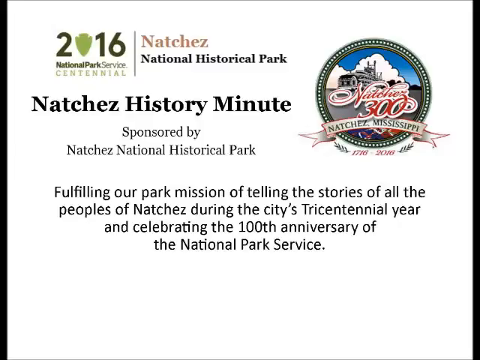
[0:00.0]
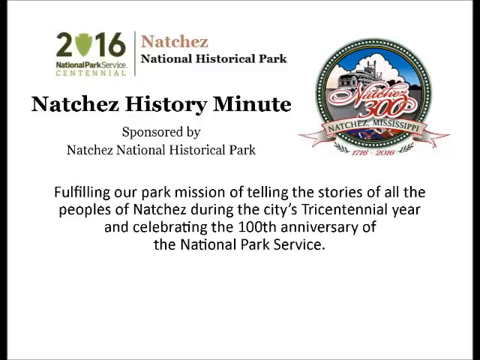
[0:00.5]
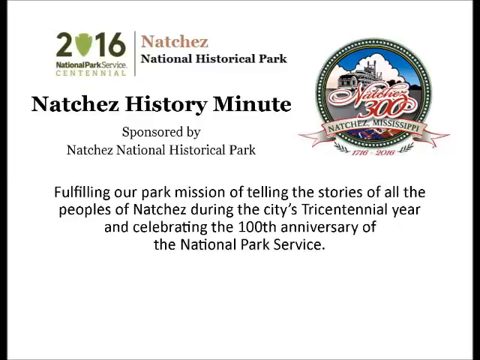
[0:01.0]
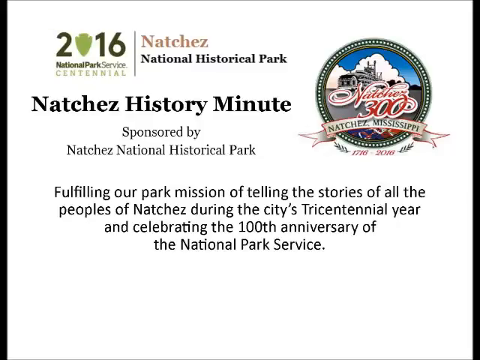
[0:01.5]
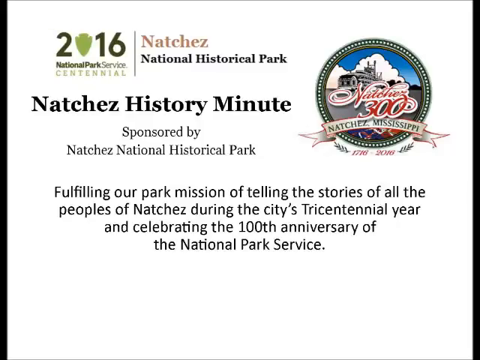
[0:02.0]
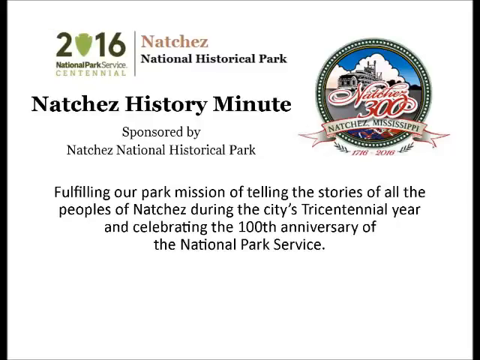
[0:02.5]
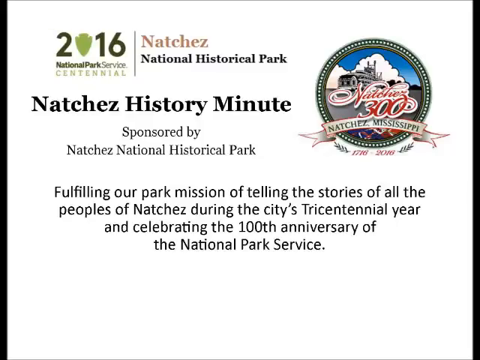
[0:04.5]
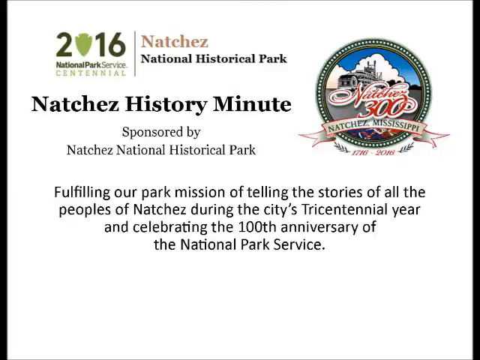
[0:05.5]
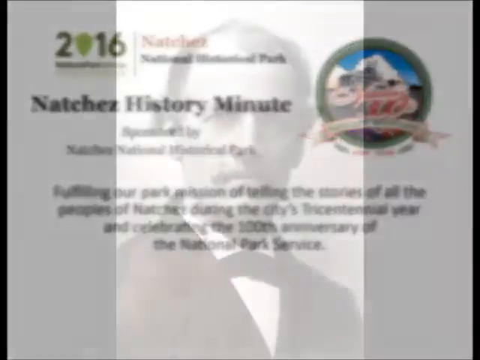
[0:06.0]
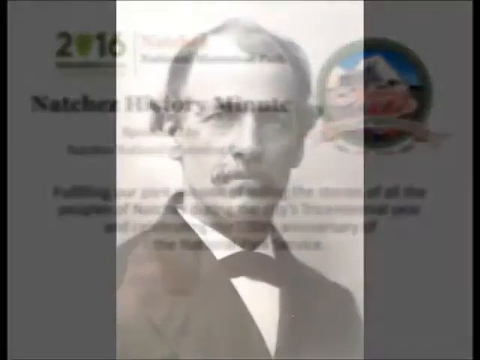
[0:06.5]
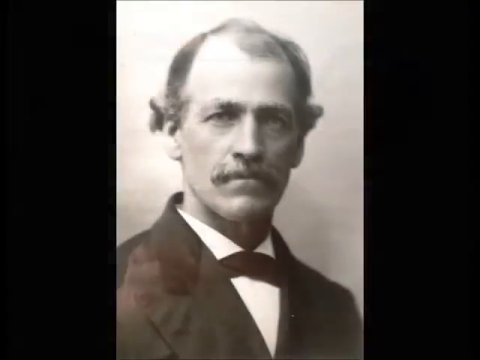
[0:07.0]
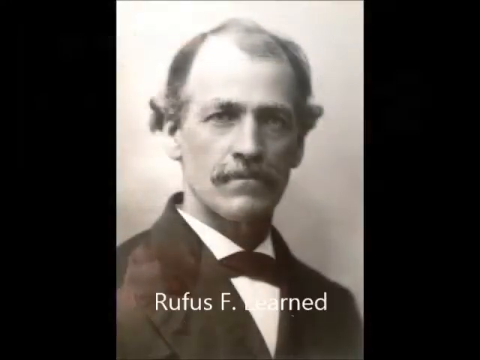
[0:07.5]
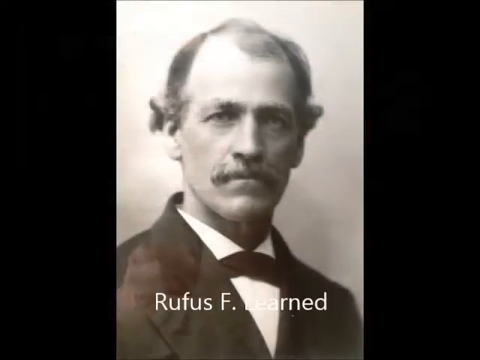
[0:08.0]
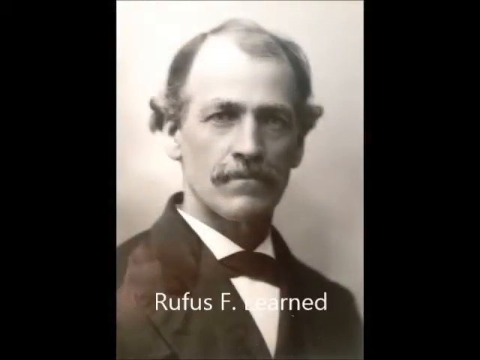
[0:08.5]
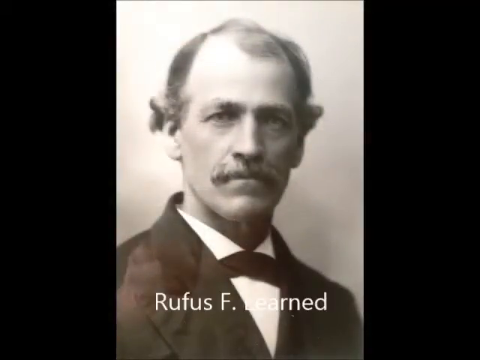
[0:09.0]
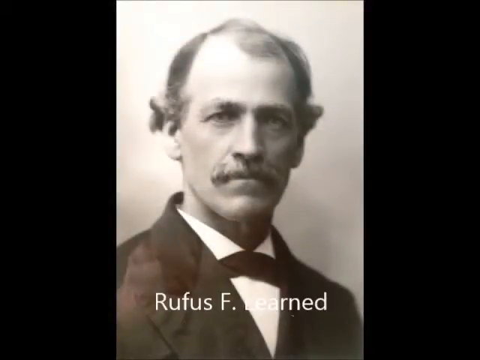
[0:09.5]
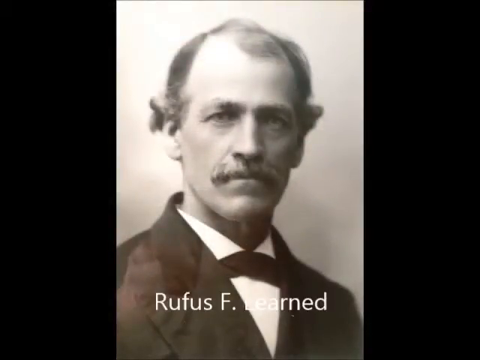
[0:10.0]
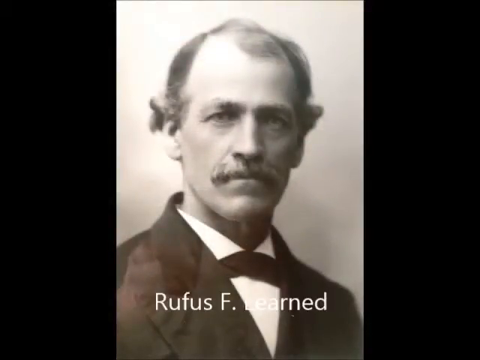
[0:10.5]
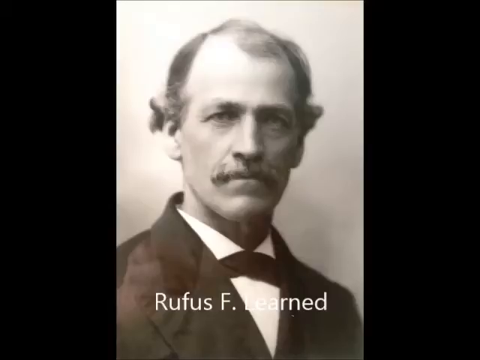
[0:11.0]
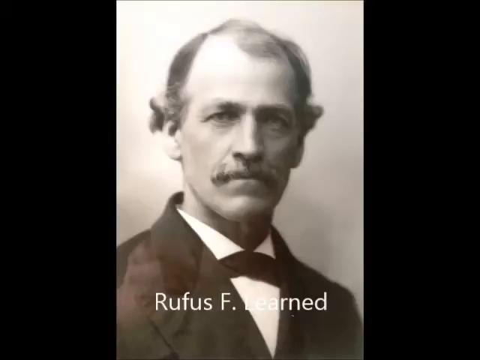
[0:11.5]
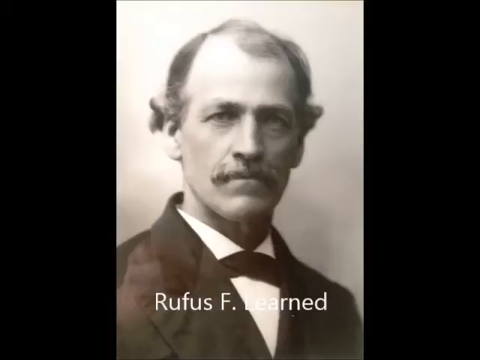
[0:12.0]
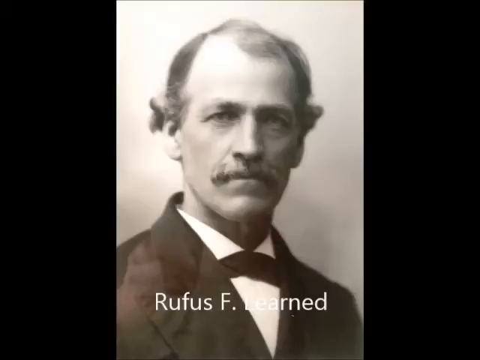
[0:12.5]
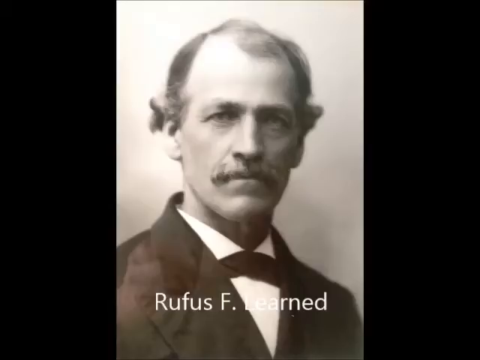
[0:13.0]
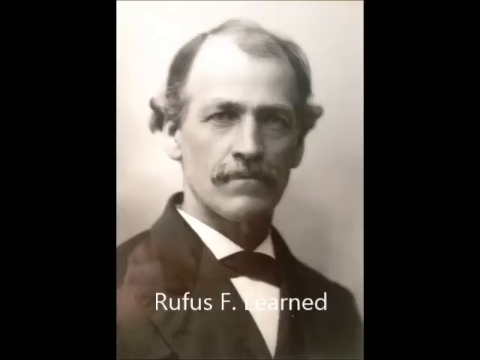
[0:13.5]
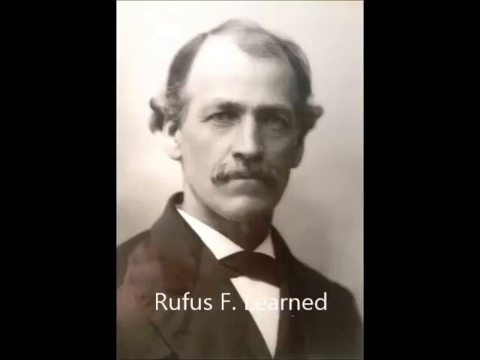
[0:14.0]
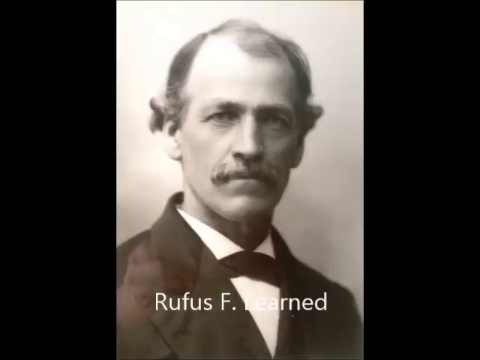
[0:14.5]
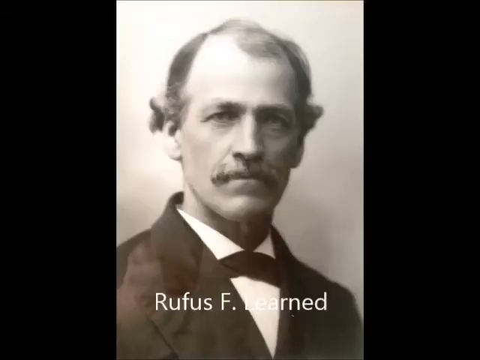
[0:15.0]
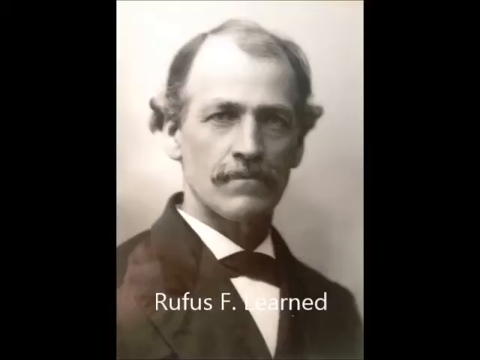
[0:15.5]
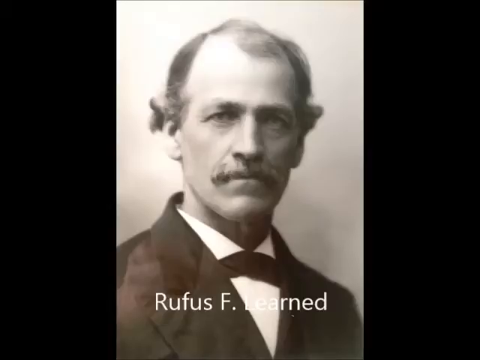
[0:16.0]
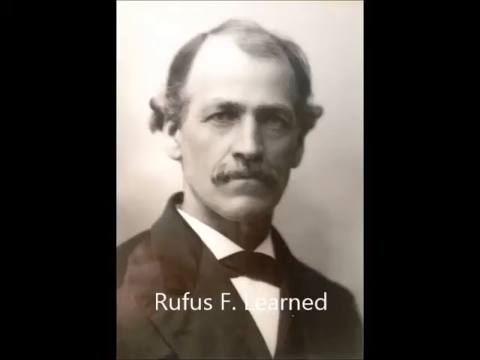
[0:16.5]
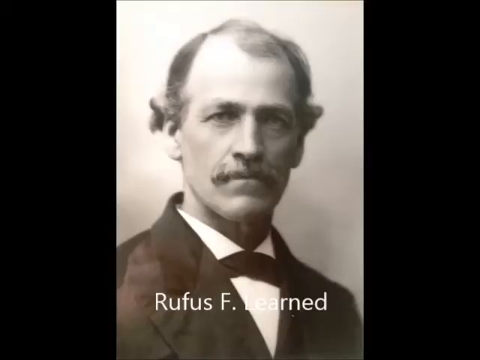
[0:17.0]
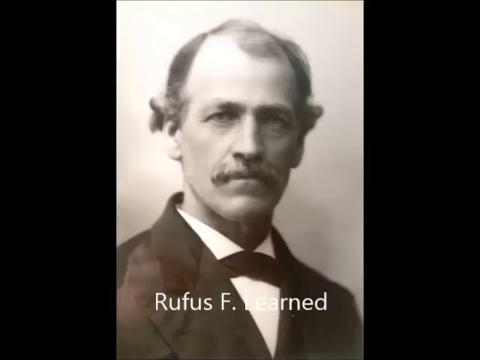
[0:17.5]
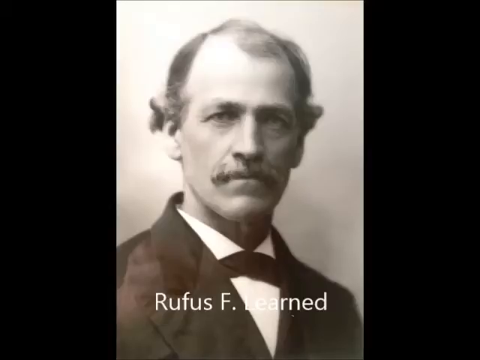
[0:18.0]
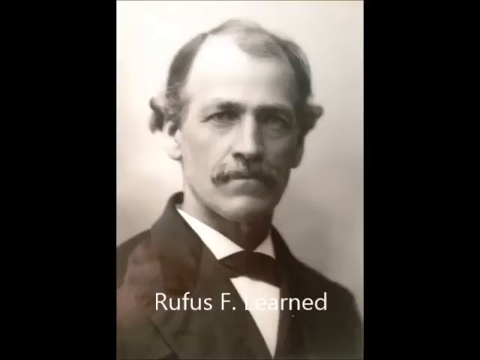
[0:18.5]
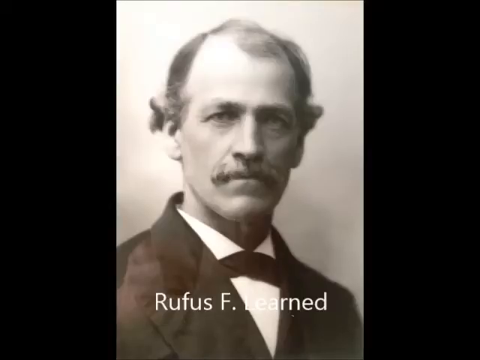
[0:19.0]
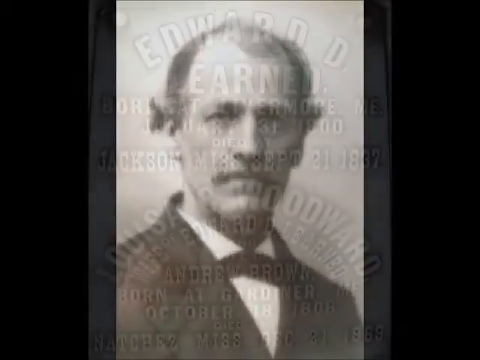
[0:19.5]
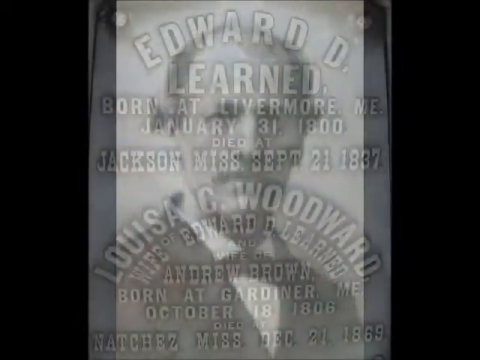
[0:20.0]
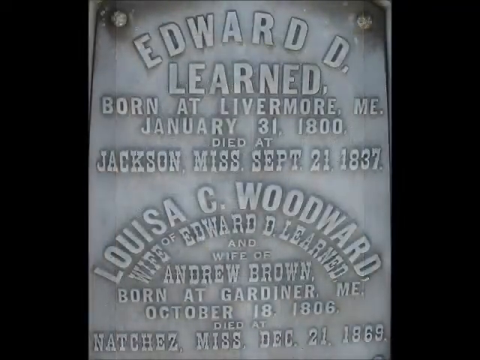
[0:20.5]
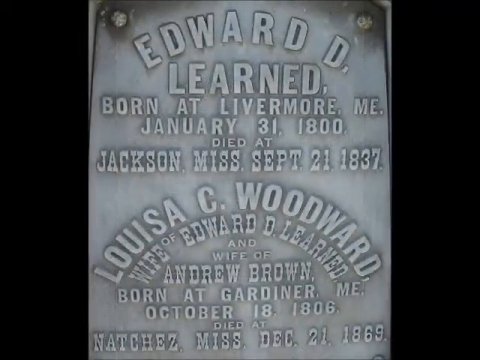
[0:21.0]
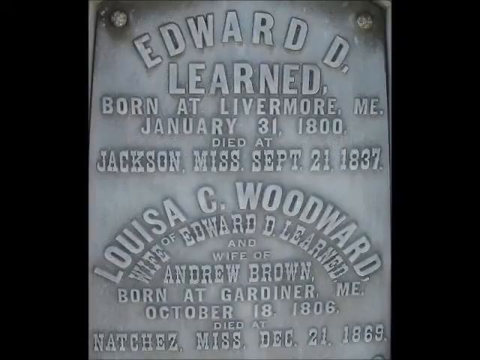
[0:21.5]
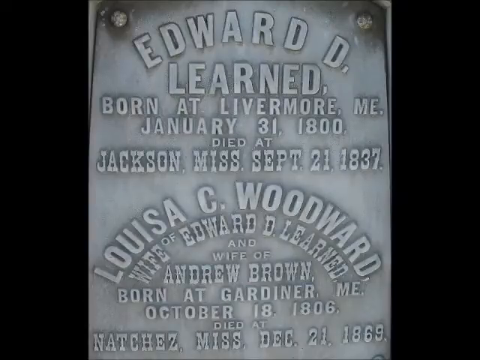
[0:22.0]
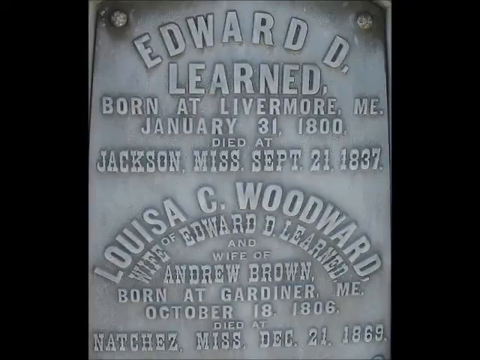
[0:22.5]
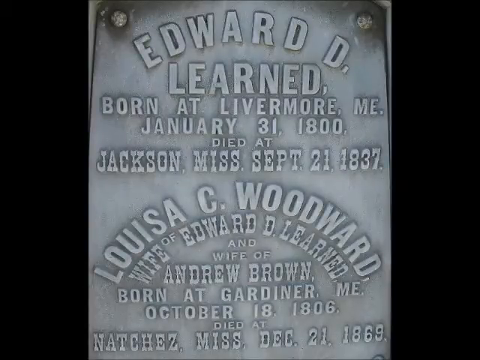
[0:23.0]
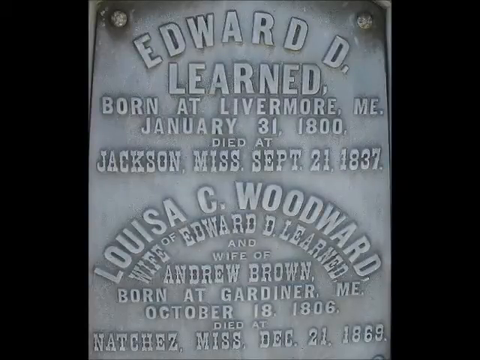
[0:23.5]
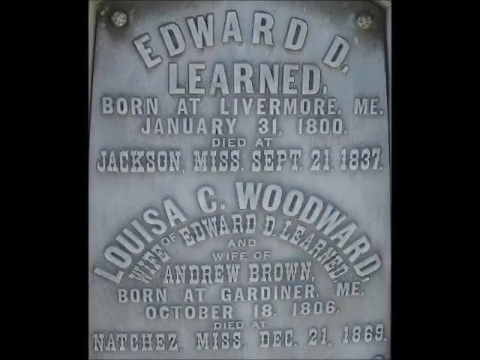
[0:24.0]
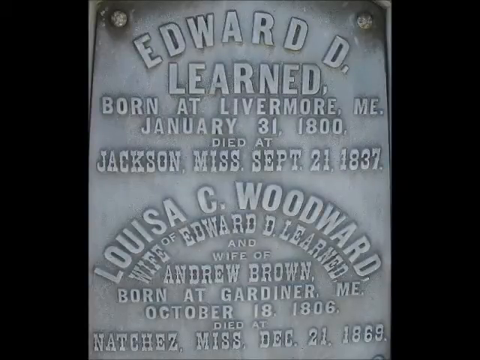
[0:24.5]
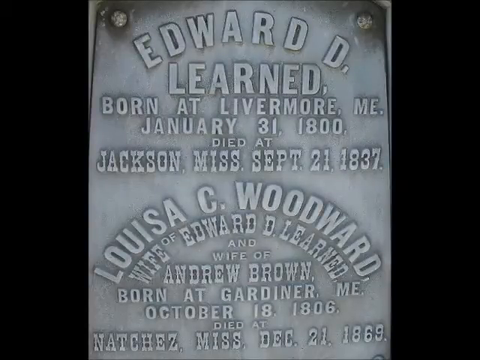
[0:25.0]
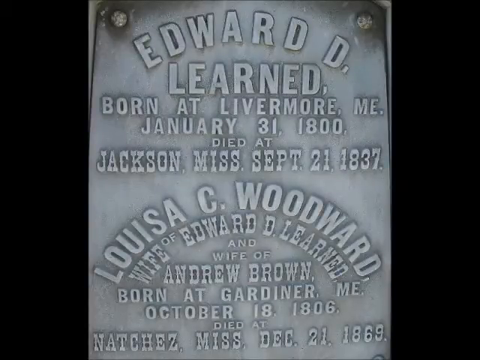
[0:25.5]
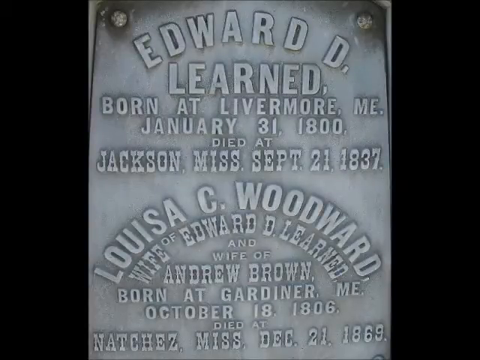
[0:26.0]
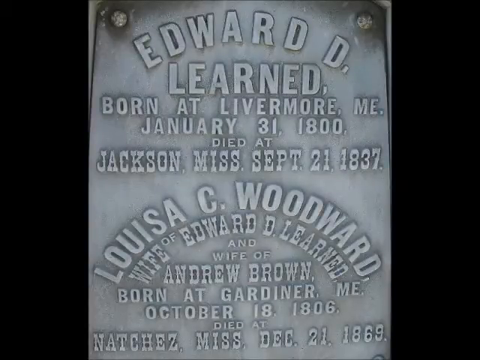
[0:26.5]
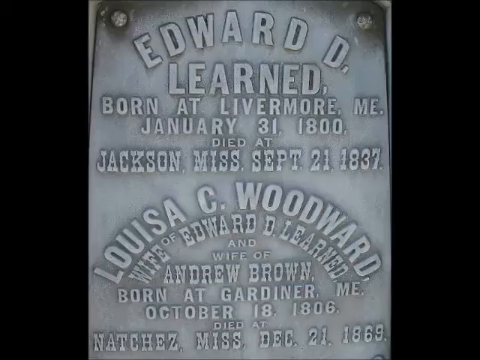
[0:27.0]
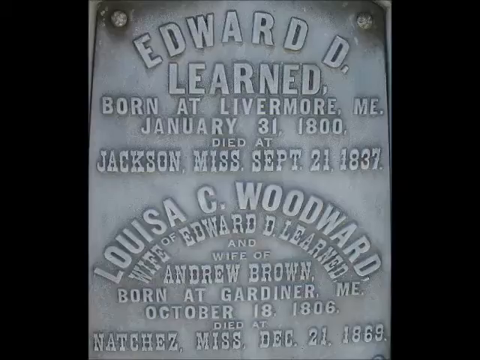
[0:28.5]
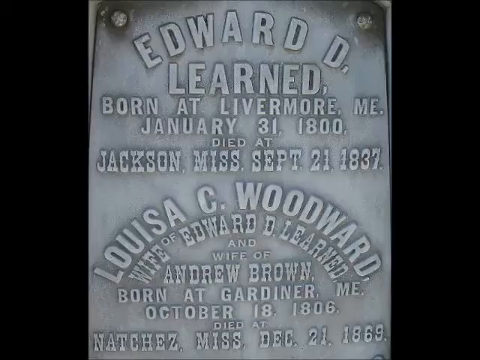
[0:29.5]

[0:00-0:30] A flyer for the Natchez National Historical Park appears, reading "Natchez History Minute" and showing its small logo and "Natchez 300." Some of the wording says it is celebrating the 100th anniversary of the National Park Service. The flyer stays on screen for a moment. Next comes a black and white picture of what looks like Rufus F. Herndon, who appears to be around 50 or 60 years old. He has a mustache and wears a black suit with a white shirt and something that looks somewhat like a tie but is not. He is balding a little on the top of his head. The picture stays on screen for a little while. Then a plaque appears, apparently made of metal, reading Edward D. Learned and giving his dates: born January 31st, 1800, and died in Jackson, Mississippi on September 21st, 1837. Below it is another name, Louis C. Woodward, born in Gardenia, Maine, October 18th, 1806, and died at Natchez, Mississippi, December 21st, 1869.